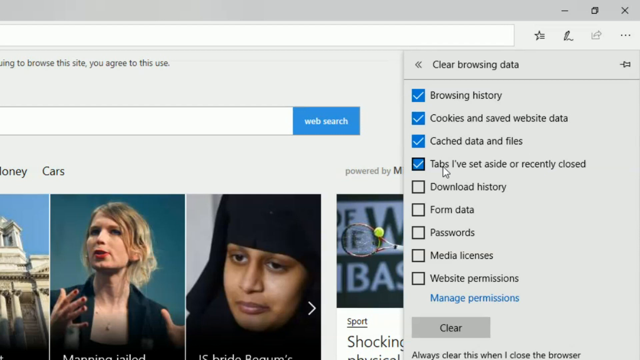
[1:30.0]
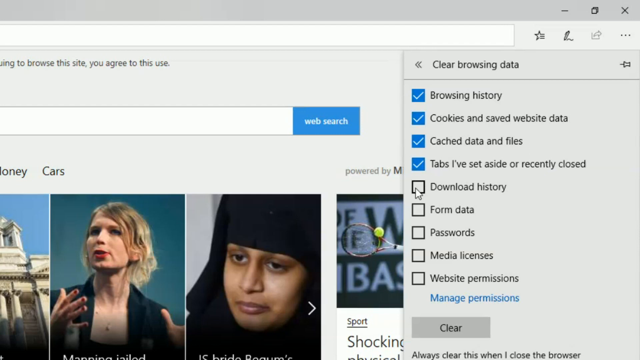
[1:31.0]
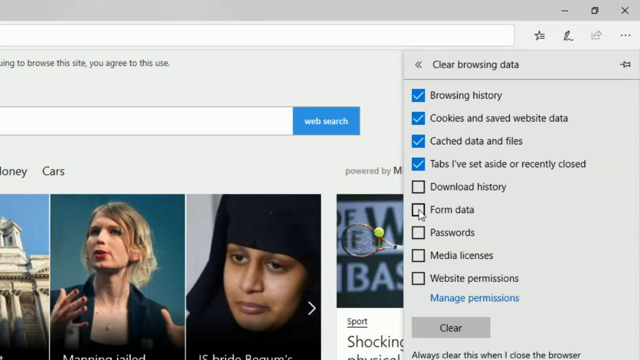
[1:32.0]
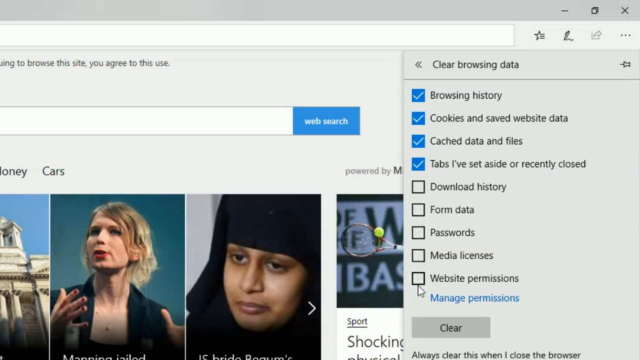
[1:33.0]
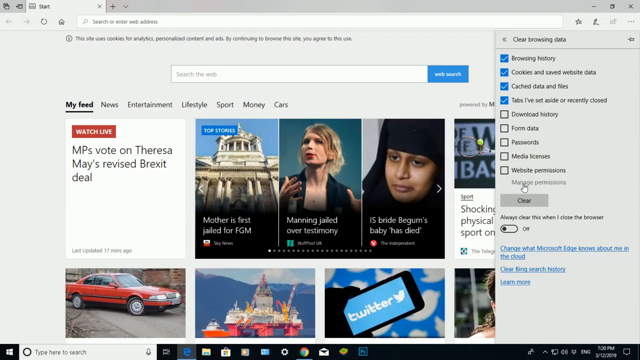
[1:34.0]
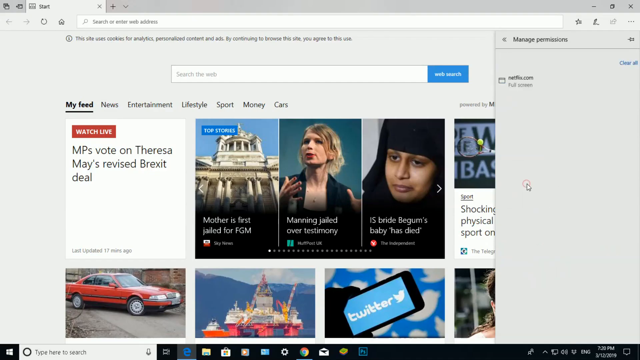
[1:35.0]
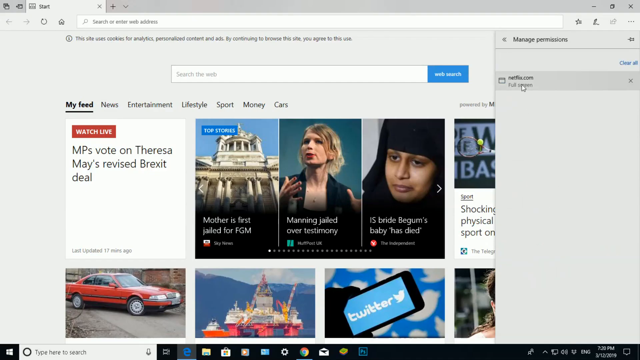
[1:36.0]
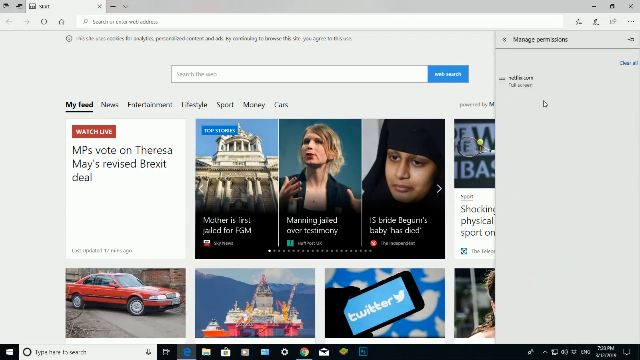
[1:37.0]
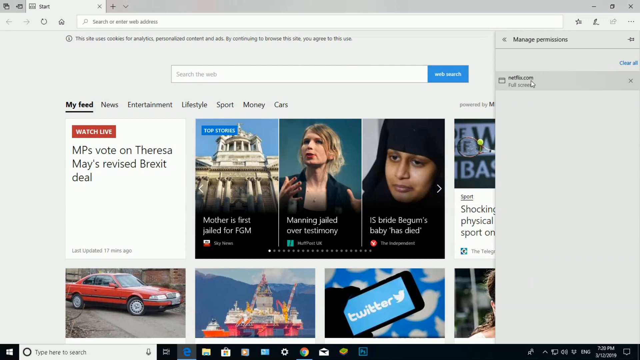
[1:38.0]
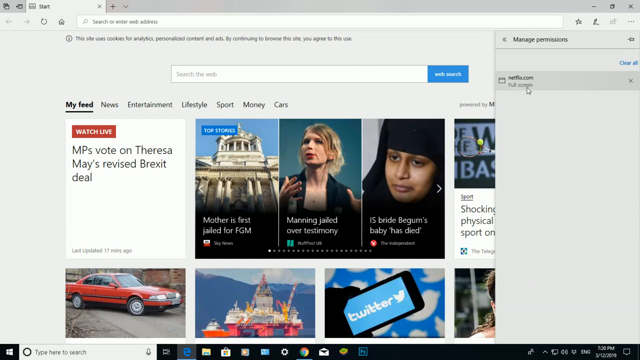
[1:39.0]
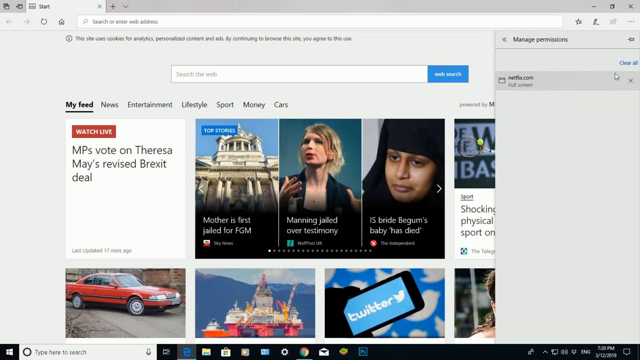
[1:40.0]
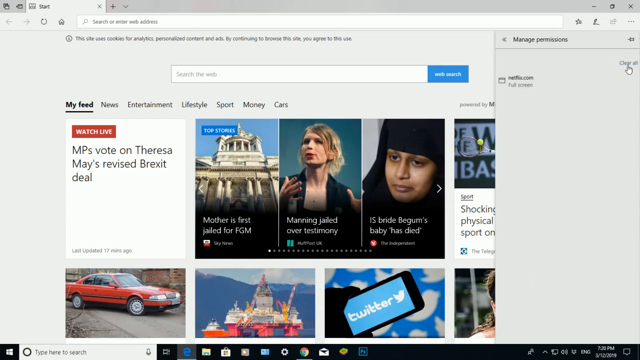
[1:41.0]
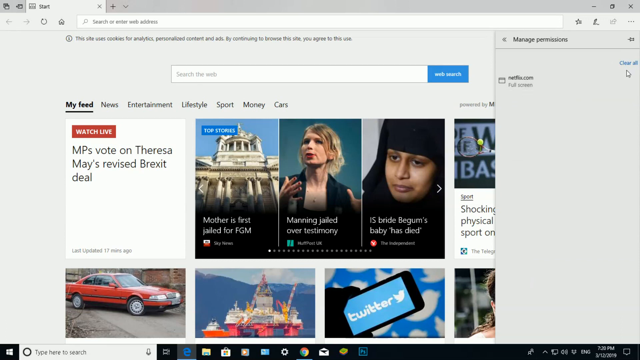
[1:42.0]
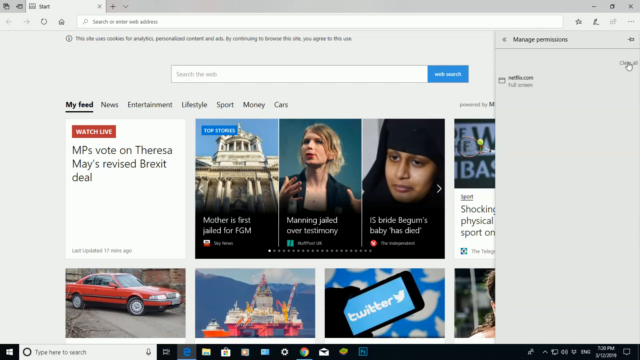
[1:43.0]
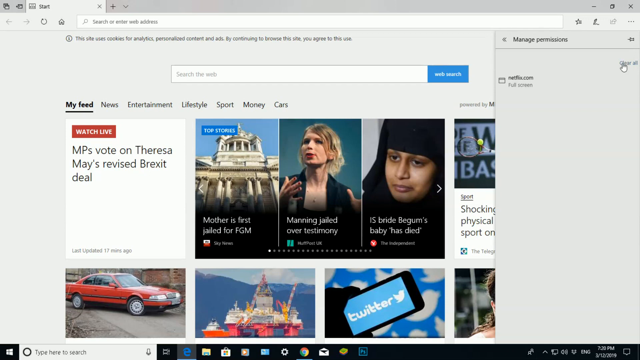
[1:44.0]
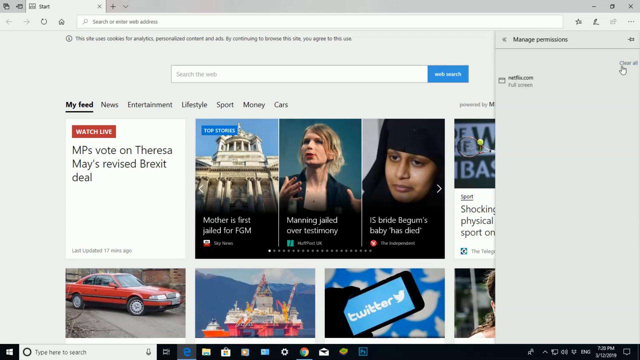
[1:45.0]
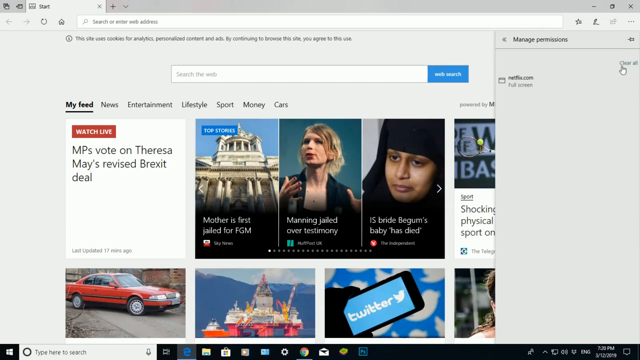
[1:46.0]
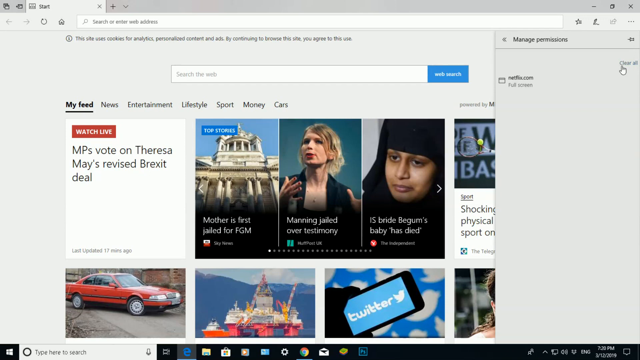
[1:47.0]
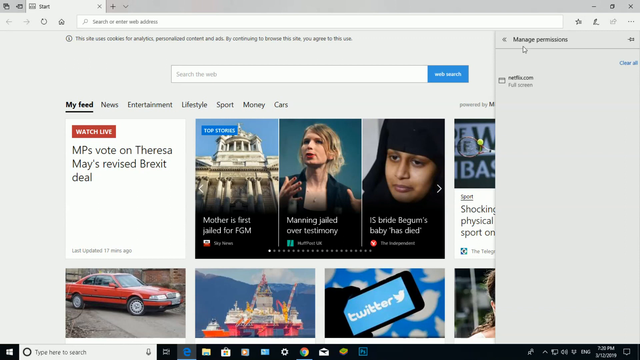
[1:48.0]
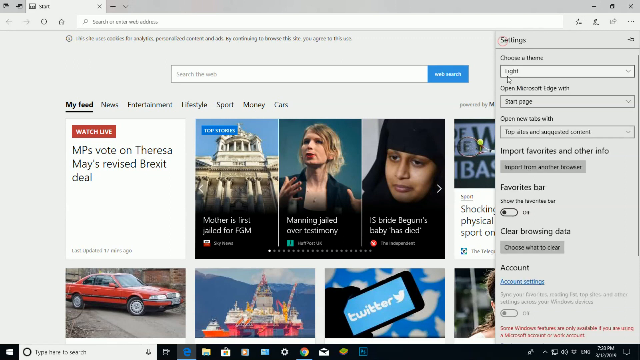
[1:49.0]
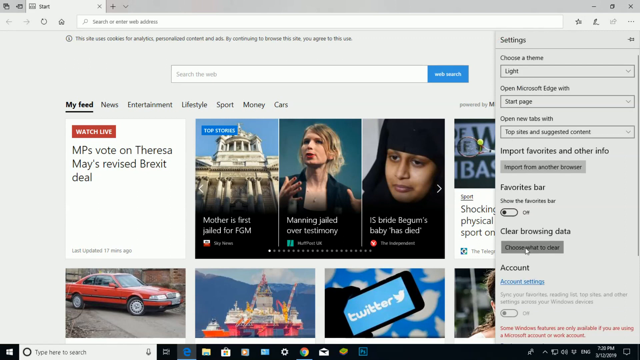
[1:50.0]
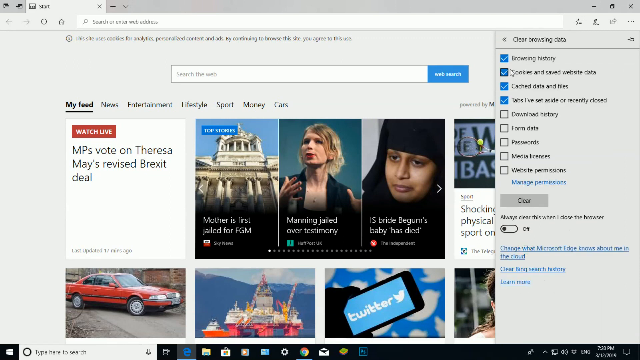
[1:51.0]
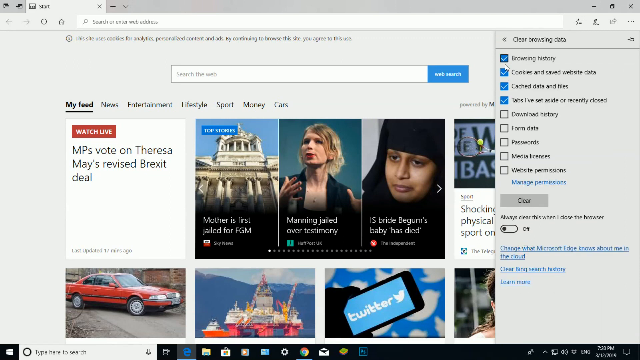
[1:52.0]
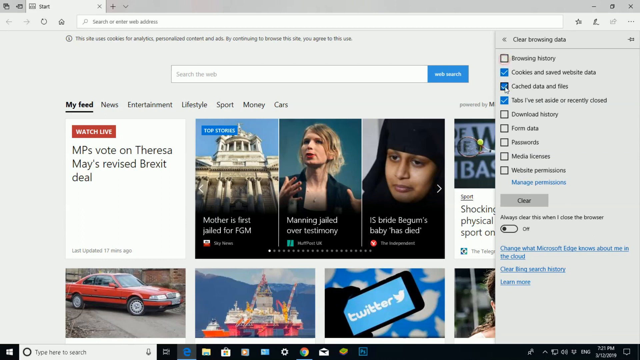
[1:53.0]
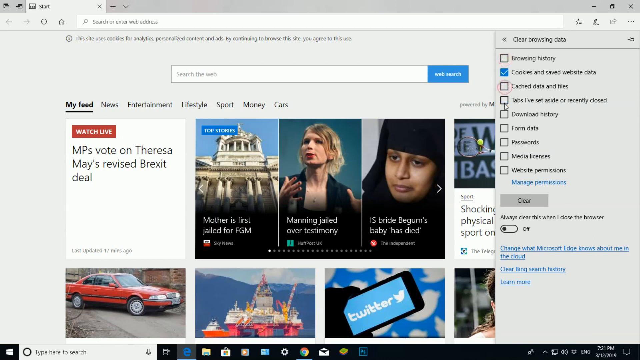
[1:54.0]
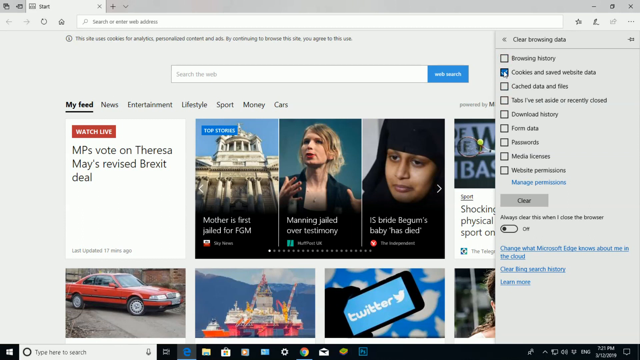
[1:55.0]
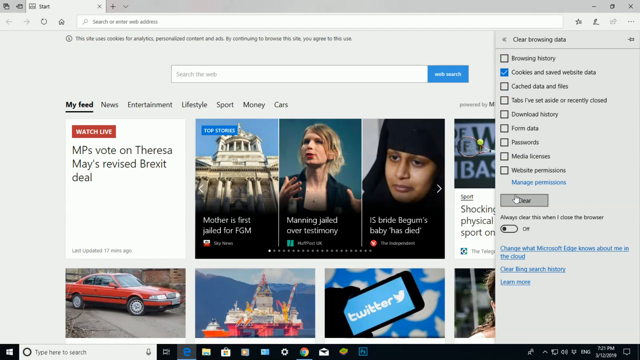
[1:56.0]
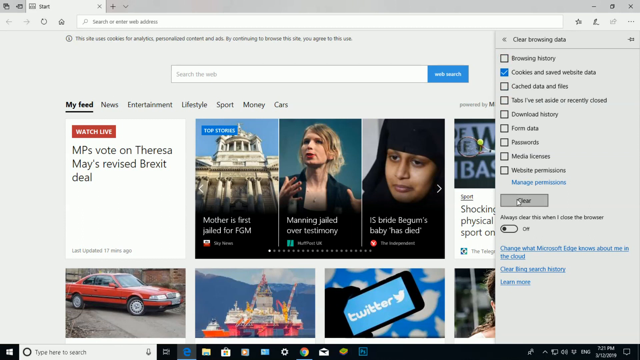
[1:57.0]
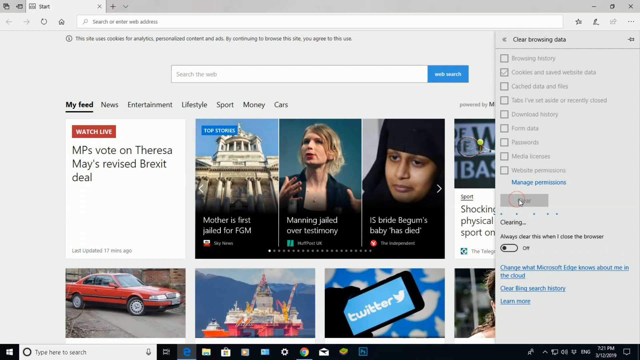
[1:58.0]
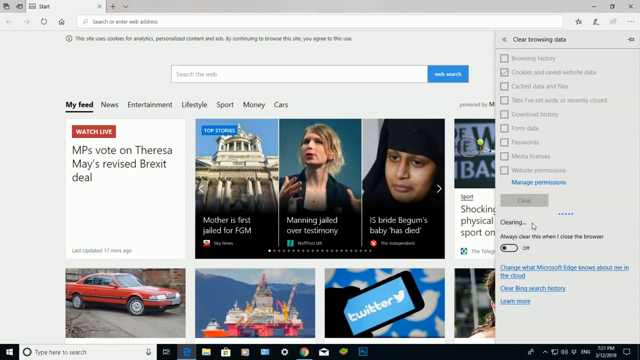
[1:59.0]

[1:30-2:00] A browser page on the Mac system shows a panel called "Clear Browsing Data" with a list of nine options, four of them already checked. The user scrolls through and clicks the words "Manage Permissions", which brings up another list with only one item, "Netflix.com". He hovers the mouse over the "Clear All" button but does not click it. He then clicks the Back button to return to the Settings page and then to the Clear Browsing Data page. He unchecks Browsing History, Cached Data and Files, and another option, then clicks the button called "Clear". The page loads for a while, with blue loading dots.